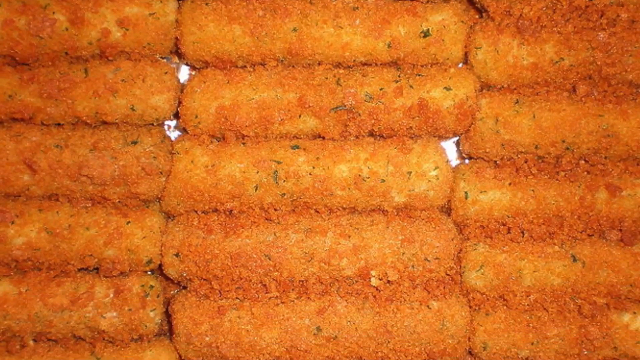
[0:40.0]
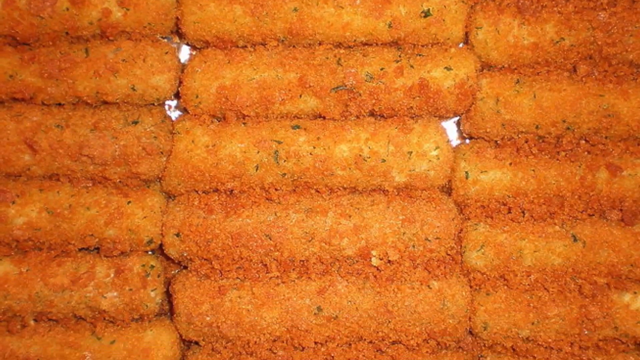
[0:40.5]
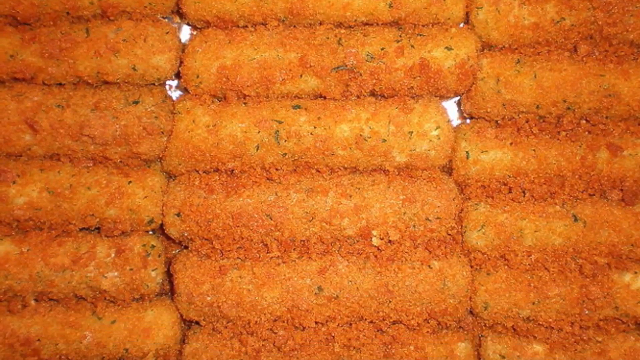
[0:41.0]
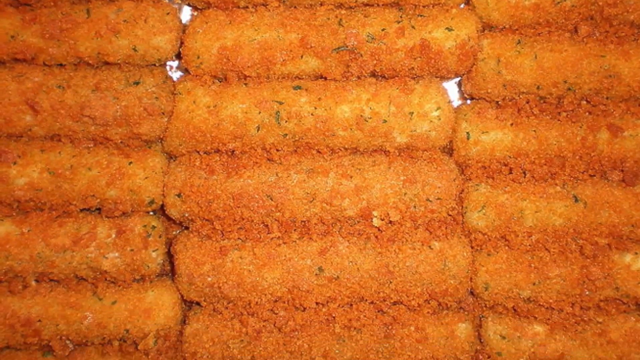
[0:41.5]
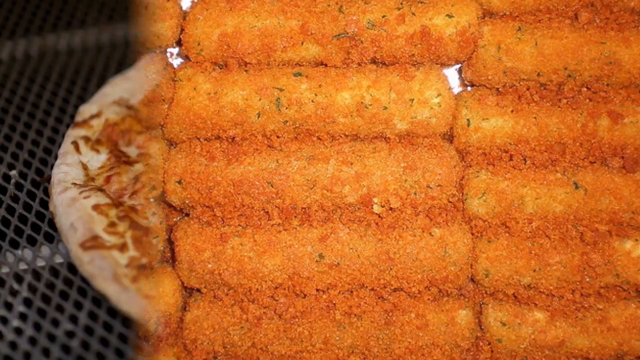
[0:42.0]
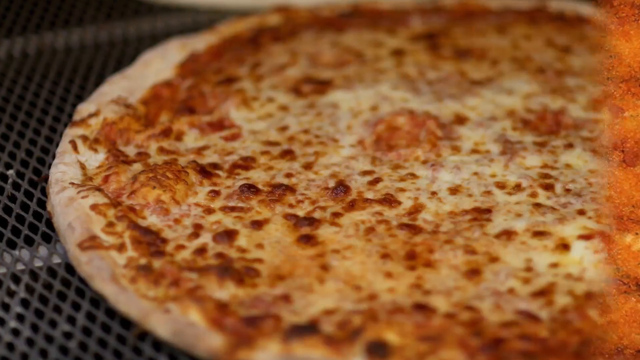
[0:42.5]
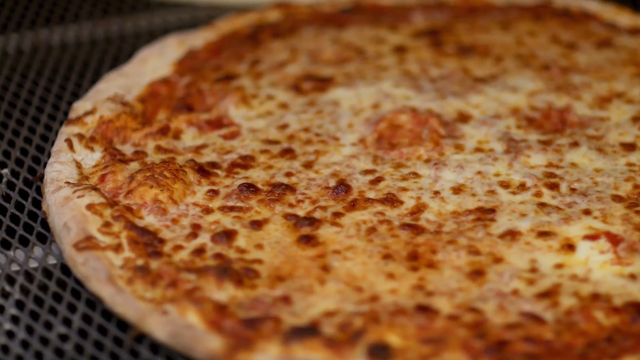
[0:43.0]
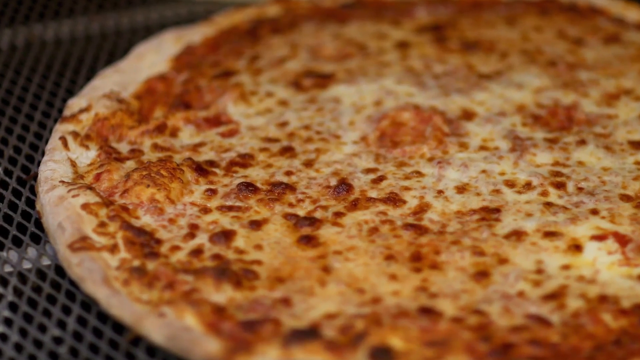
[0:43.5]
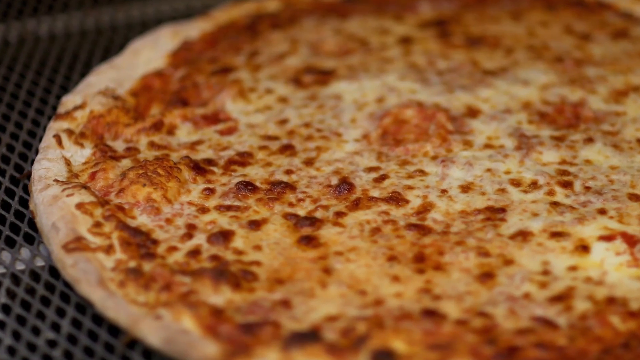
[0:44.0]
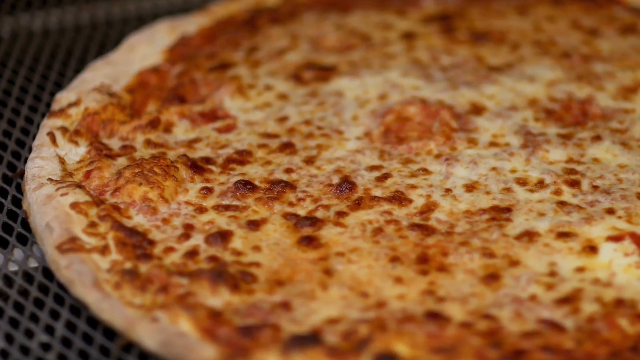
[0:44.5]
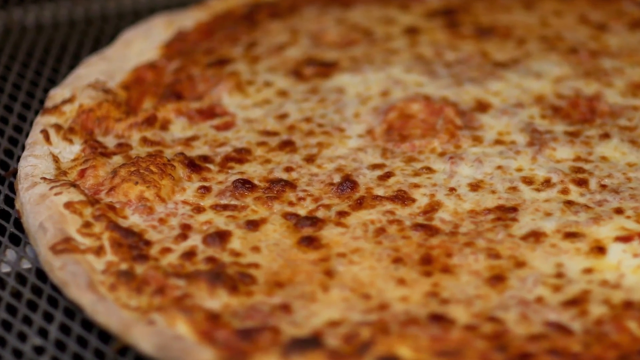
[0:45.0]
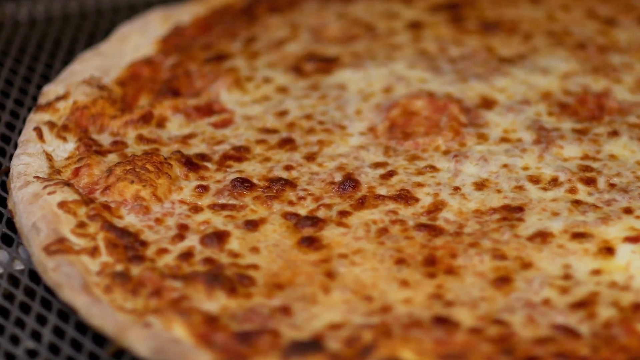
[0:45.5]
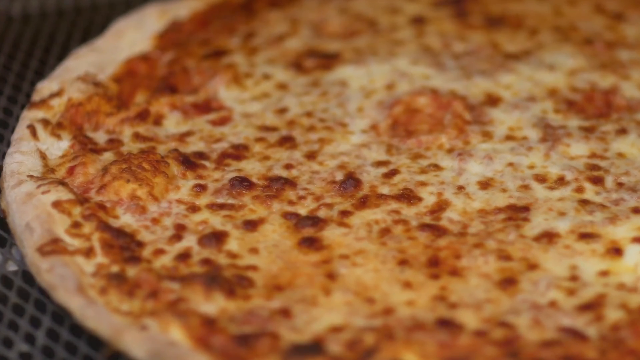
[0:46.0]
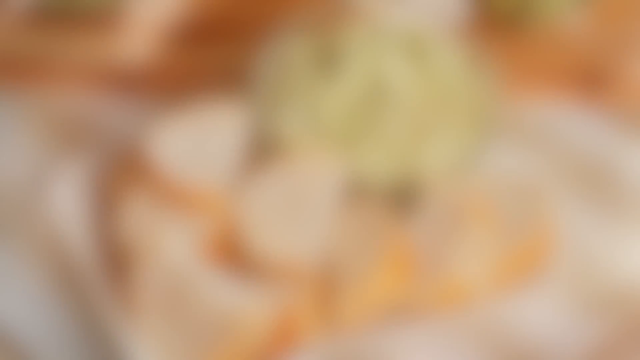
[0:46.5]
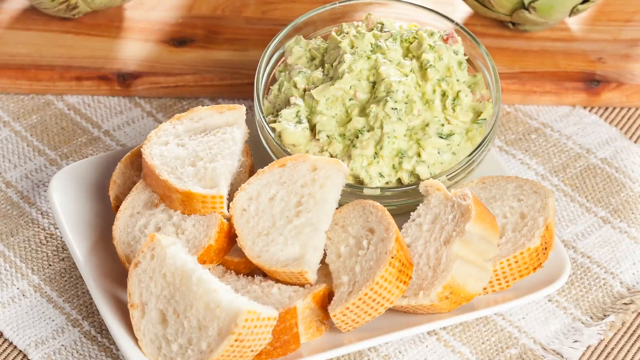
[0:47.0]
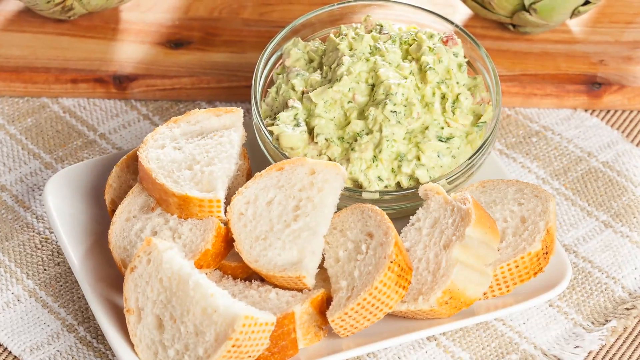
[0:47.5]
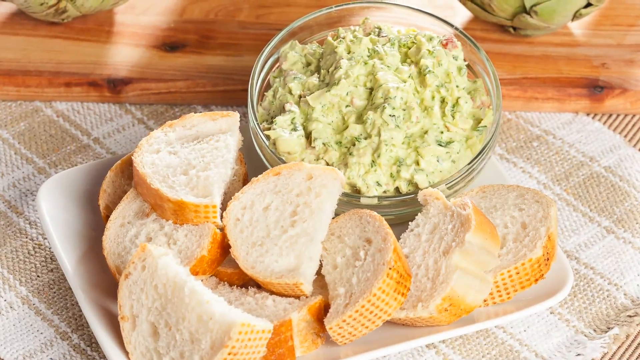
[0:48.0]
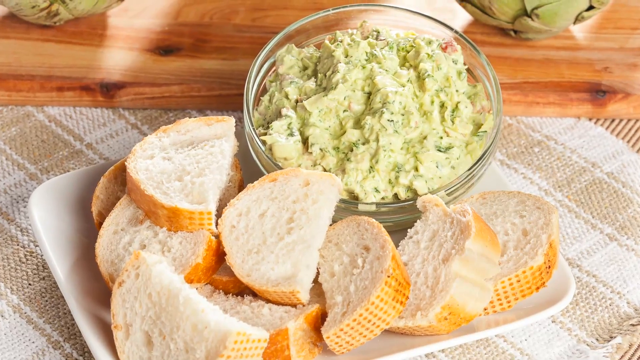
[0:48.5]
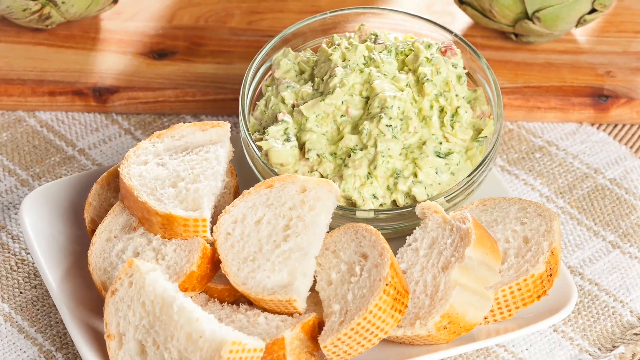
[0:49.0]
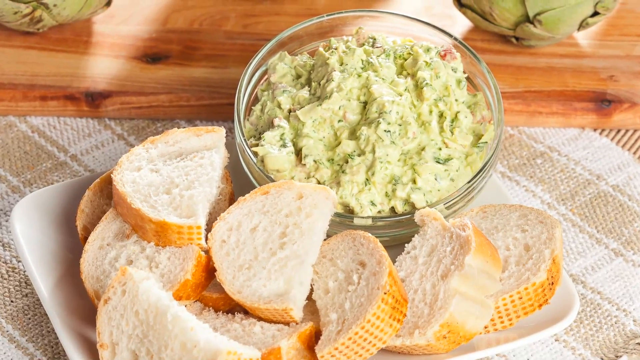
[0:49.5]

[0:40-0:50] Sausage is sprinkled with what seems to be dried pepper. Another image shows a pancake placed on a fryer, either being fried or baked. Bread and what appears to be salad or sausage are placed on a white plate on top of a brown table, ready to be served.